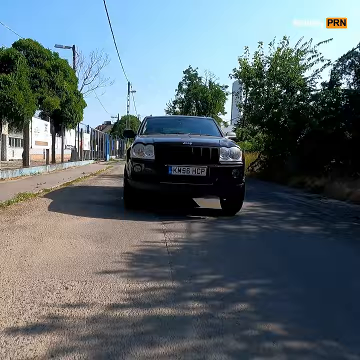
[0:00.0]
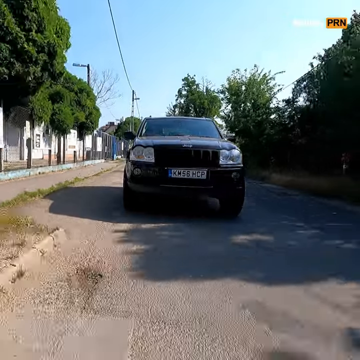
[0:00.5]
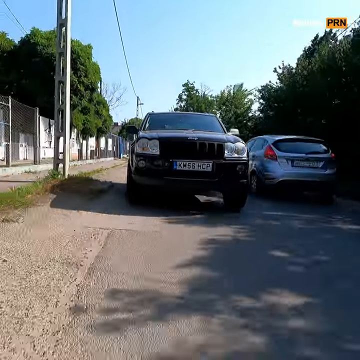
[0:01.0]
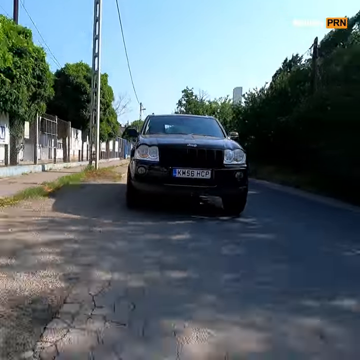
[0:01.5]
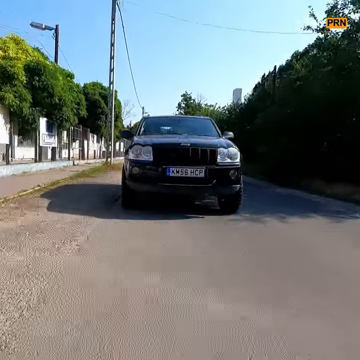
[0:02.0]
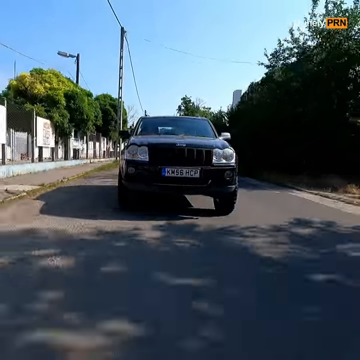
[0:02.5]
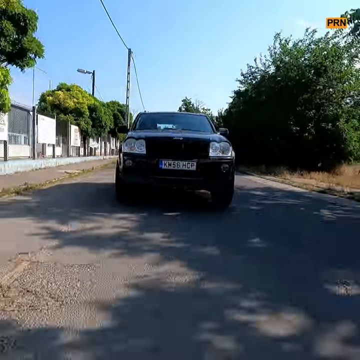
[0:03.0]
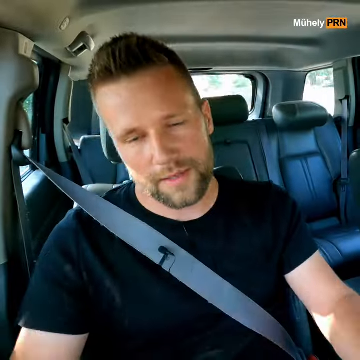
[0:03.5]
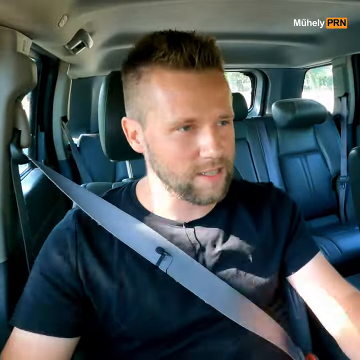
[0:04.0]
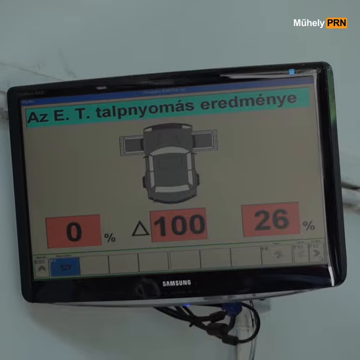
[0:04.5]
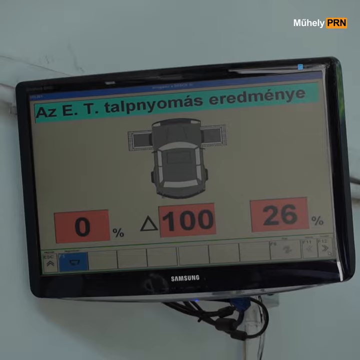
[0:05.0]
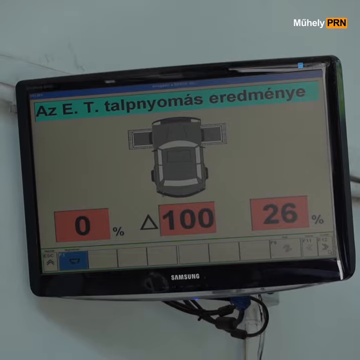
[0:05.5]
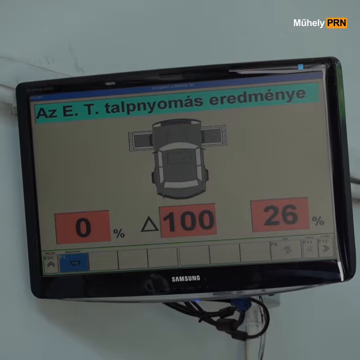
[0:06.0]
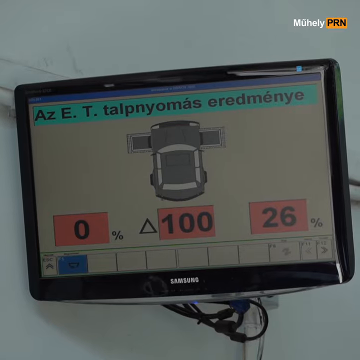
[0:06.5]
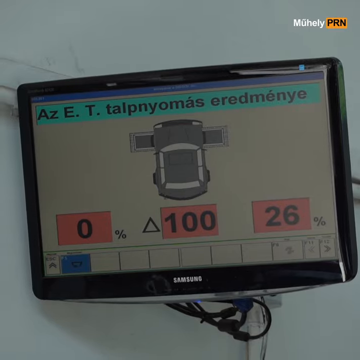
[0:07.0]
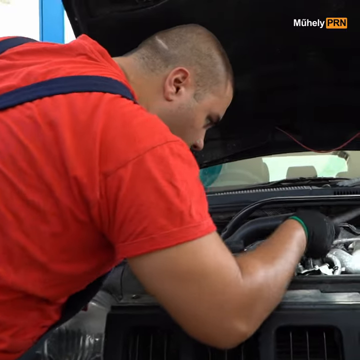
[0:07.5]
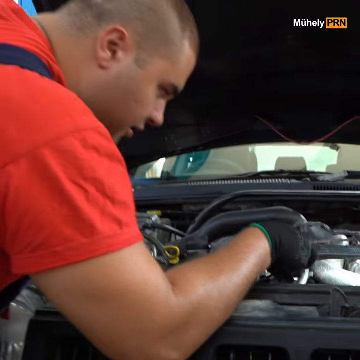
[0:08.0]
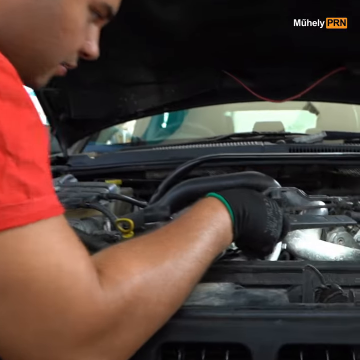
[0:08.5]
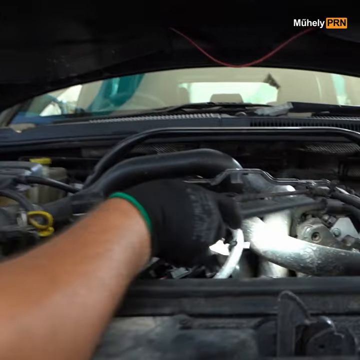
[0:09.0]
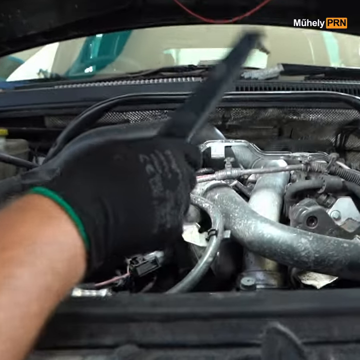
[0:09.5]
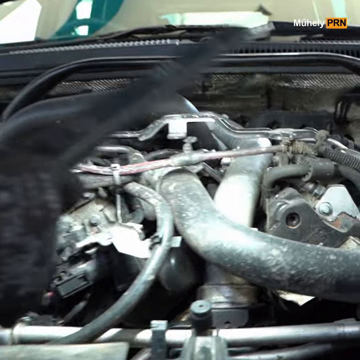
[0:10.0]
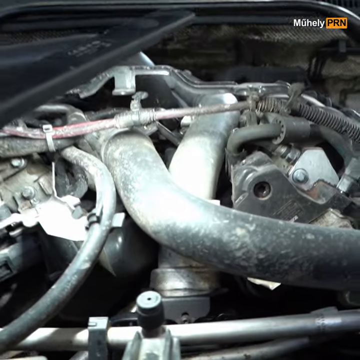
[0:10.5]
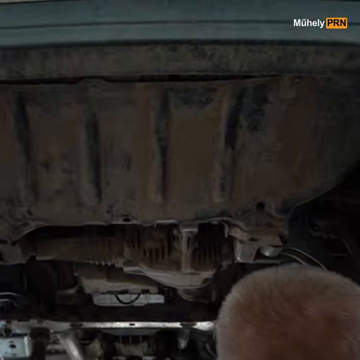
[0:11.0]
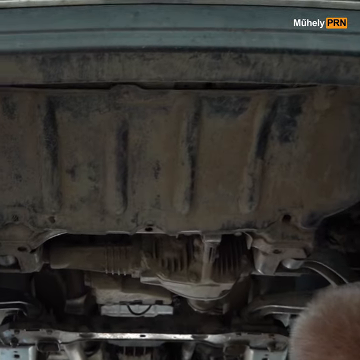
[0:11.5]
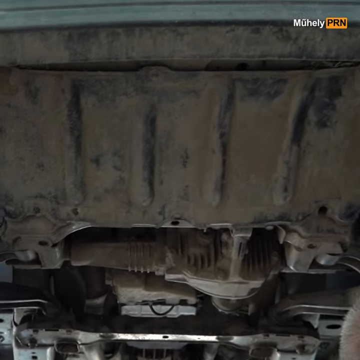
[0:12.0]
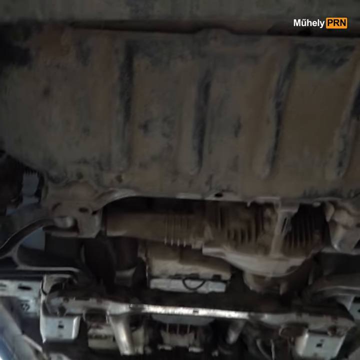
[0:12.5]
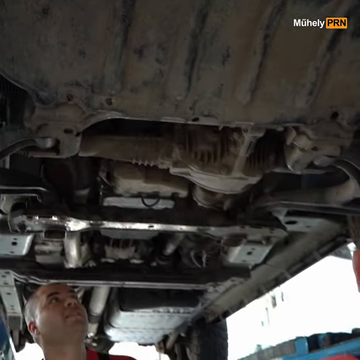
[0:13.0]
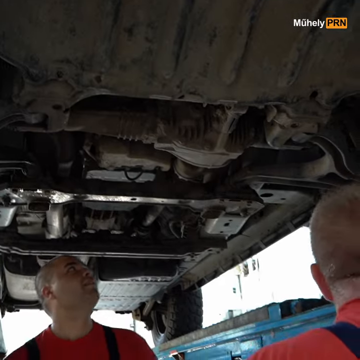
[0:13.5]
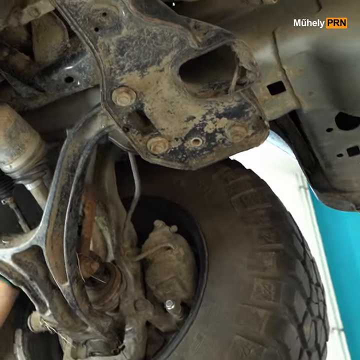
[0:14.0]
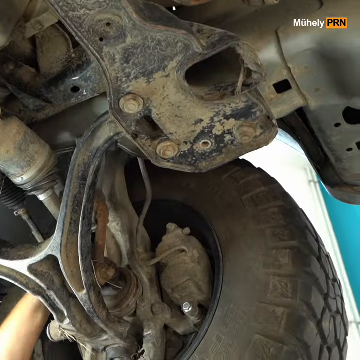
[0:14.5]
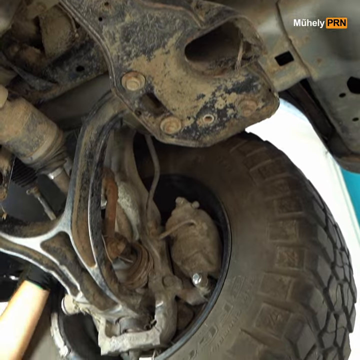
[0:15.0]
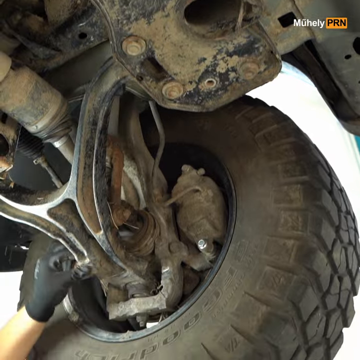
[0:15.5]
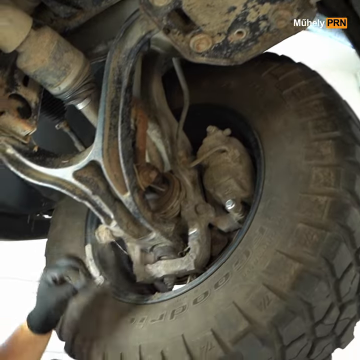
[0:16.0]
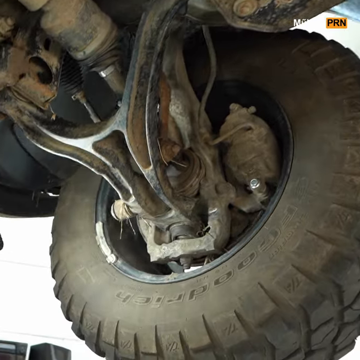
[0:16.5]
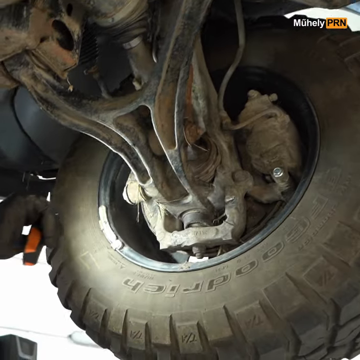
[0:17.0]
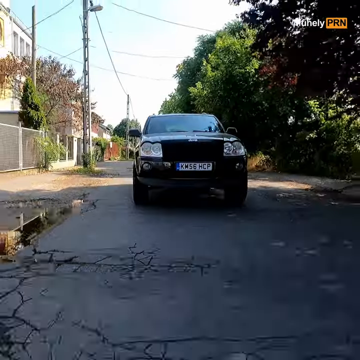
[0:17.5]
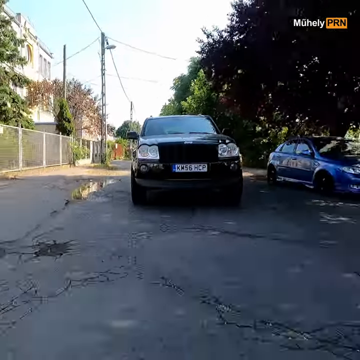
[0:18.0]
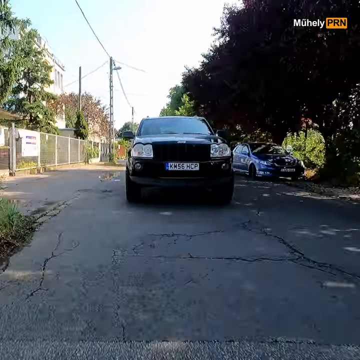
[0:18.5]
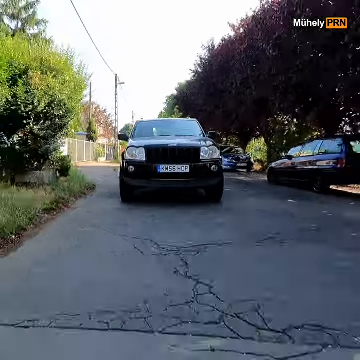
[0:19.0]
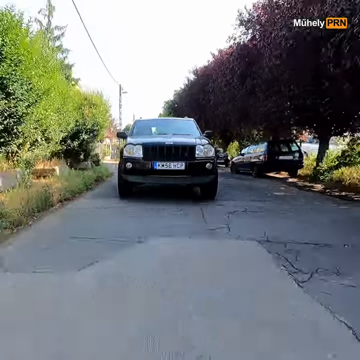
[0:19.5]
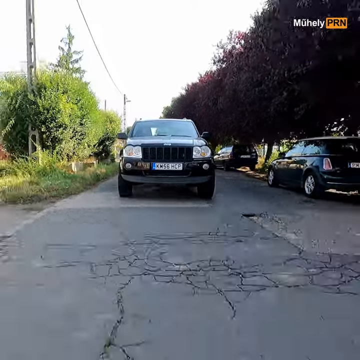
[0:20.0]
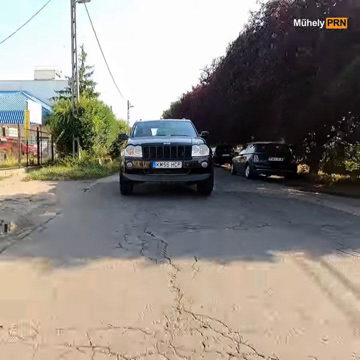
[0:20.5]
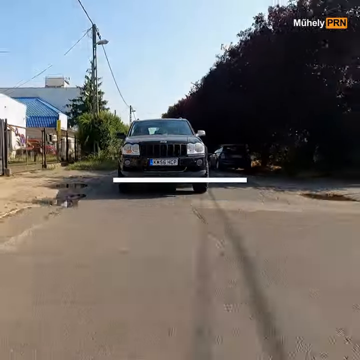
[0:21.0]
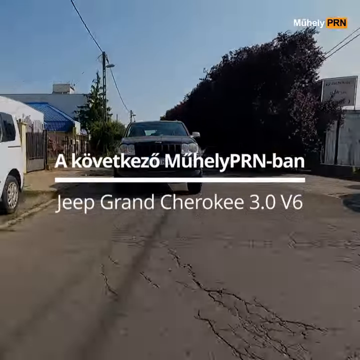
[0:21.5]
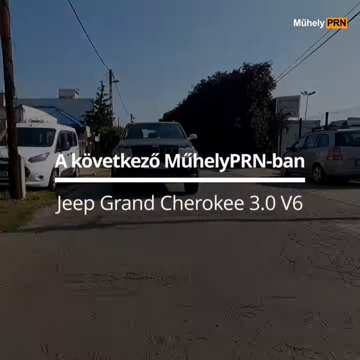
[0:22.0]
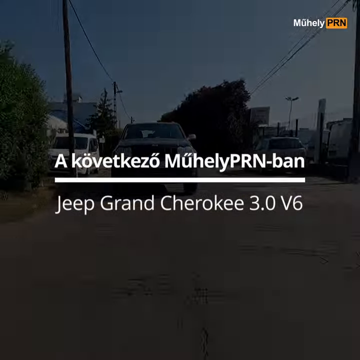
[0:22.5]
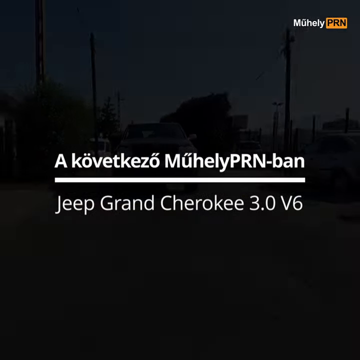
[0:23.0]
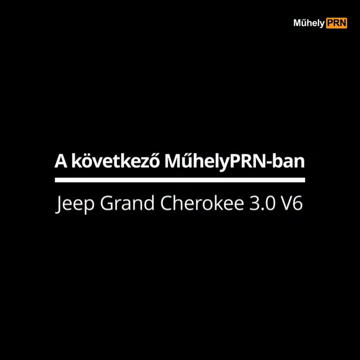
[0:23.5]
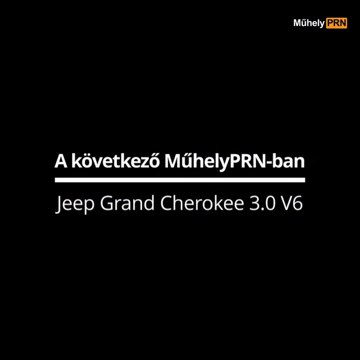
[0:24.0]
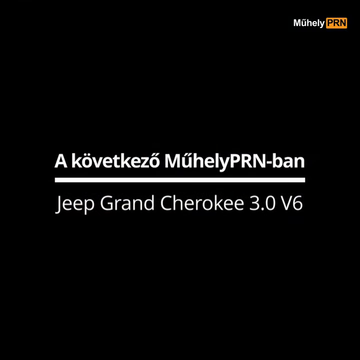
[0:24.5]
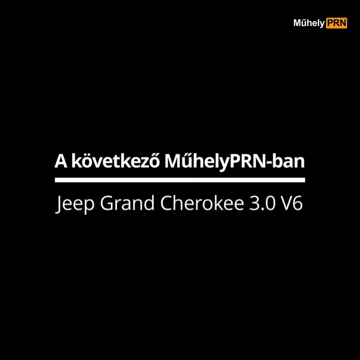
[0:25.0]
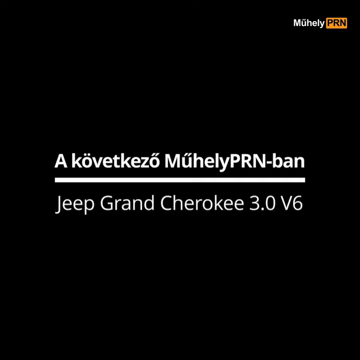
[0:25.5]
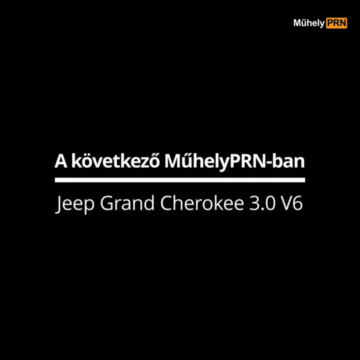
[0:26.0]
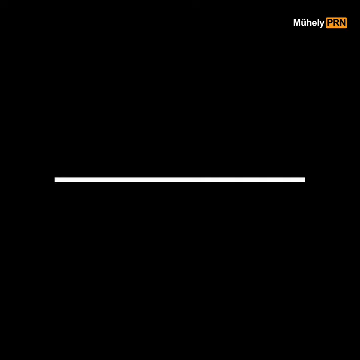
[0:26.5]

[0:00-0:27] The video's title appears to be in German; it apparently refers to a Jeep Cherokee, a Grand Cherokee 3.0 V6. It opens with footage filmed from the back of a car driving down a road, looking behind it toward the front of a green Jeep. The Jeep has Euro-style plates reading "KM56HCP" and says "Jeep" on the front. The road is older, kind of desolate and a little run down, and the Jeep comes forward toward the camera, with the Jeep and the filming car moving at about the same pace. The video switches to a GPS-looking device that appears to show some of the car's metrics. It then switches to a mechanic looking under the hood. Next, the view is underneath the car's suspension; the car is lifted in the air and is quite muddy. They hold a light and inspect the inside of the wheel hub. Something appears to be wrong with the car.